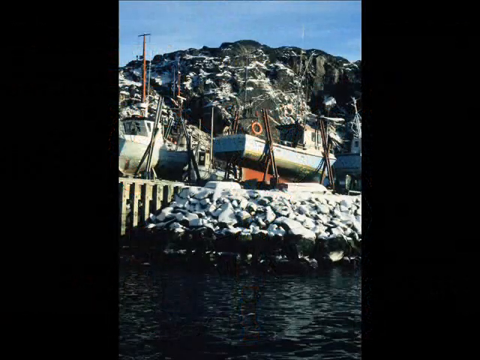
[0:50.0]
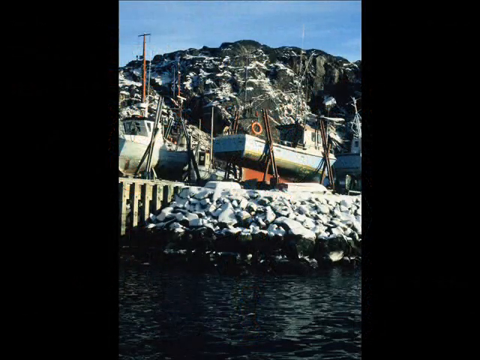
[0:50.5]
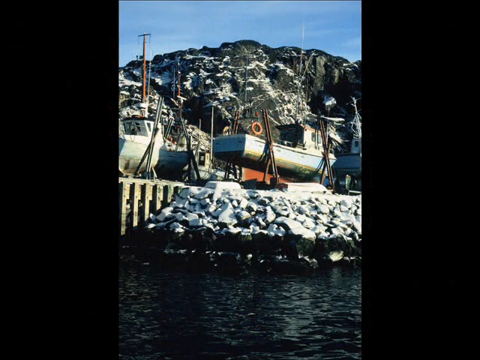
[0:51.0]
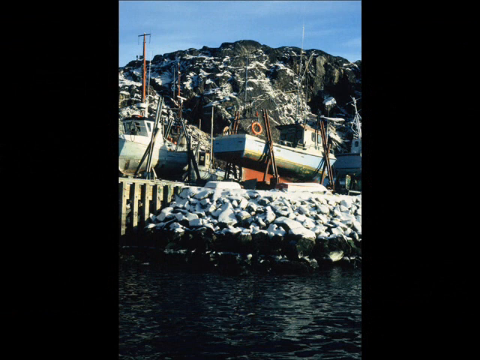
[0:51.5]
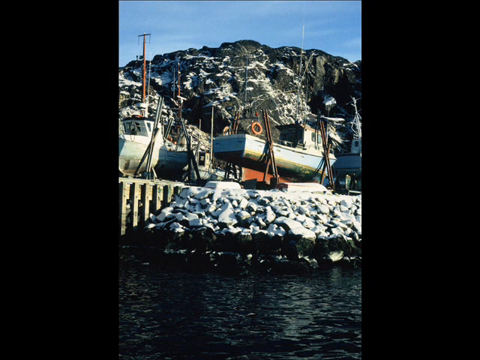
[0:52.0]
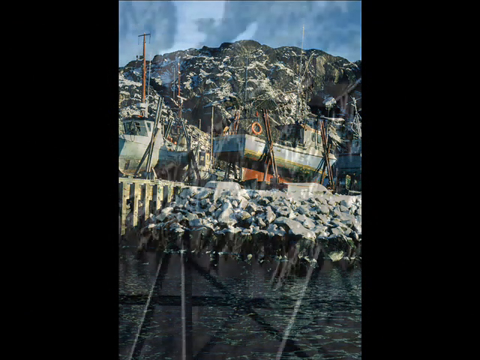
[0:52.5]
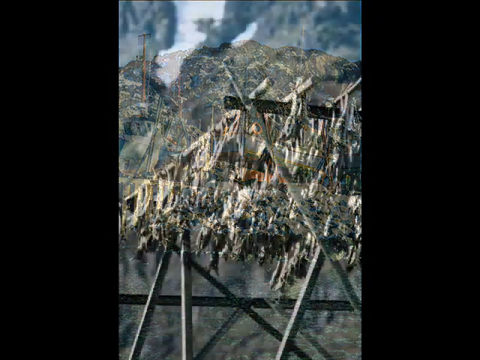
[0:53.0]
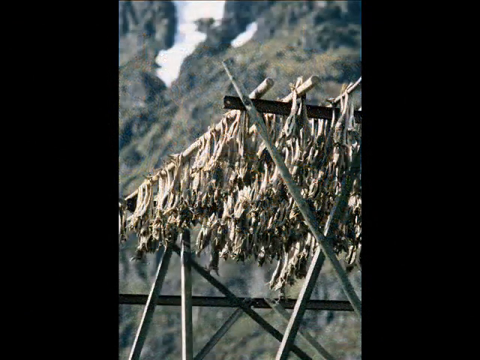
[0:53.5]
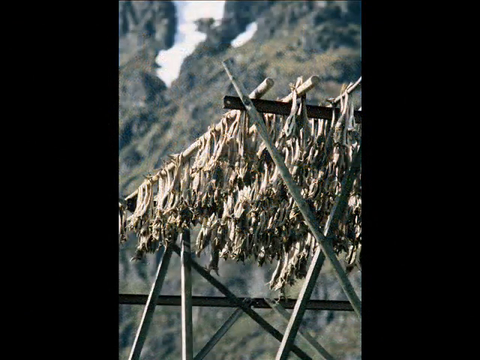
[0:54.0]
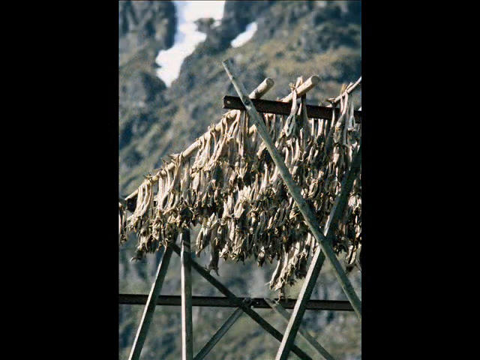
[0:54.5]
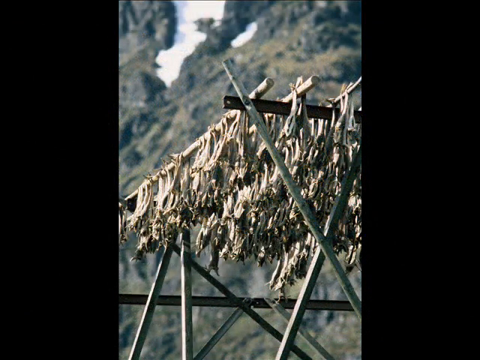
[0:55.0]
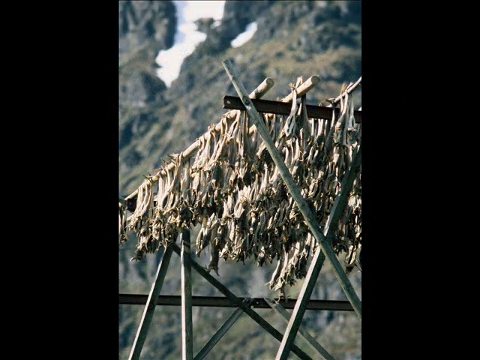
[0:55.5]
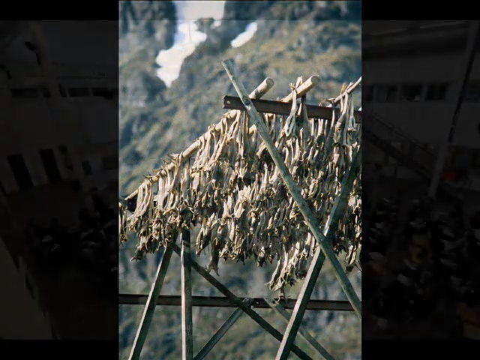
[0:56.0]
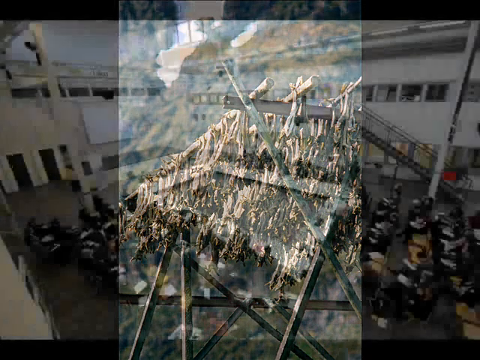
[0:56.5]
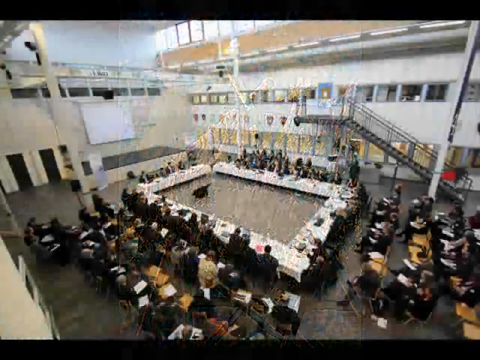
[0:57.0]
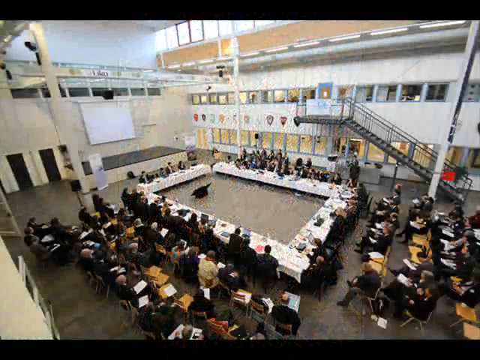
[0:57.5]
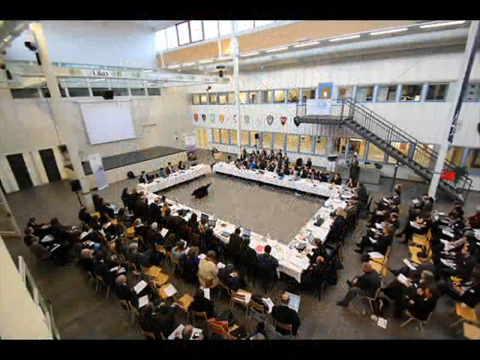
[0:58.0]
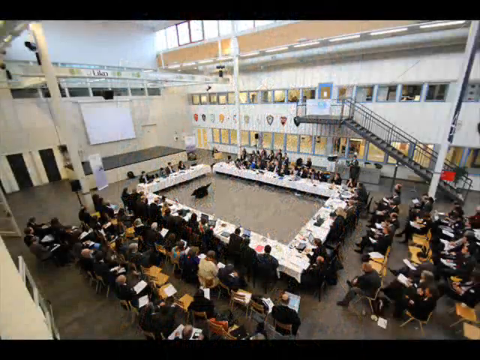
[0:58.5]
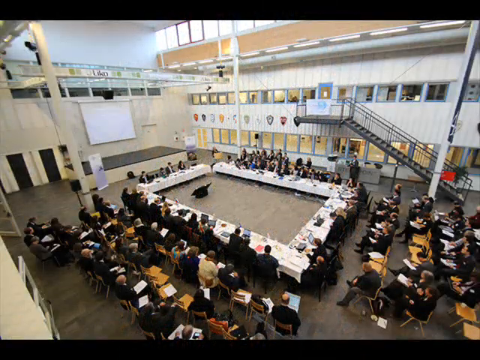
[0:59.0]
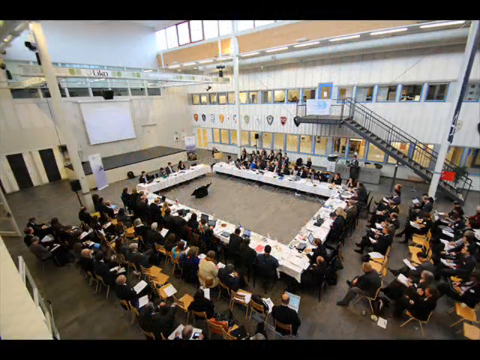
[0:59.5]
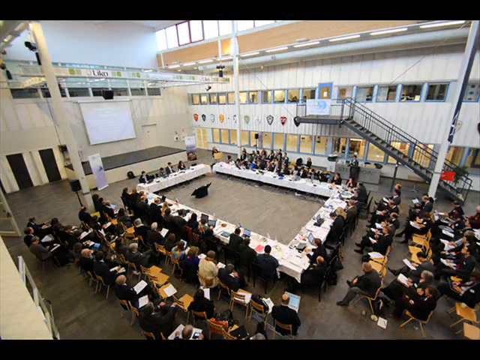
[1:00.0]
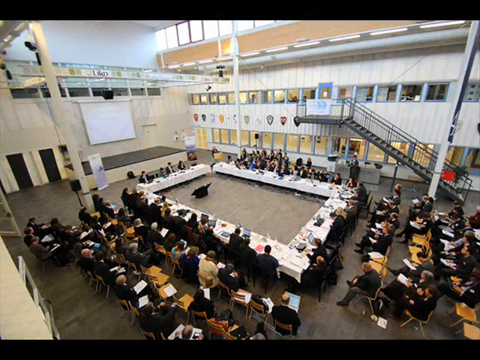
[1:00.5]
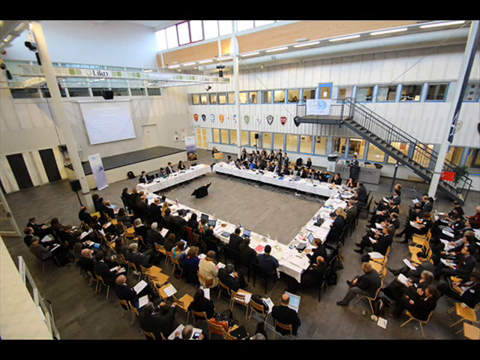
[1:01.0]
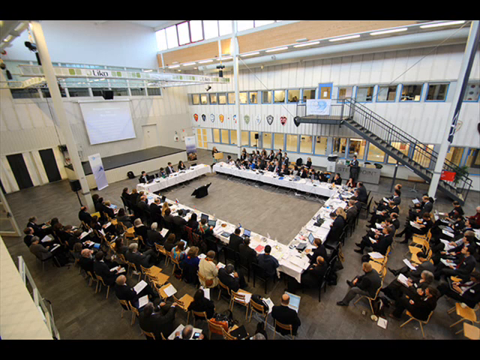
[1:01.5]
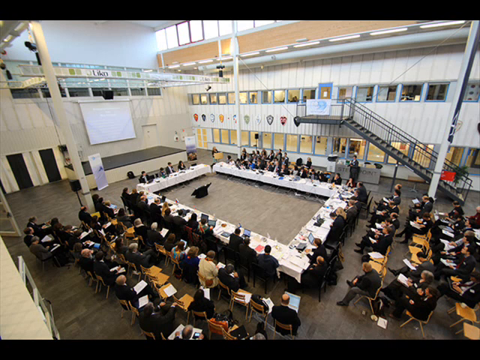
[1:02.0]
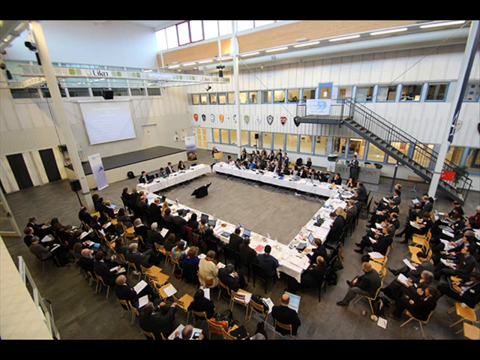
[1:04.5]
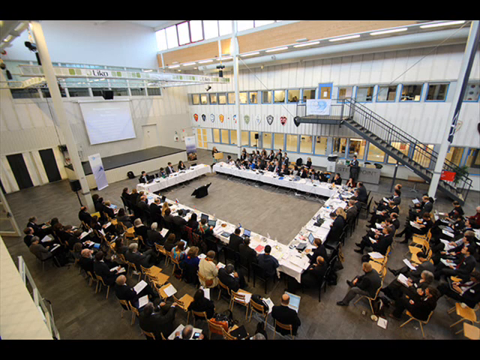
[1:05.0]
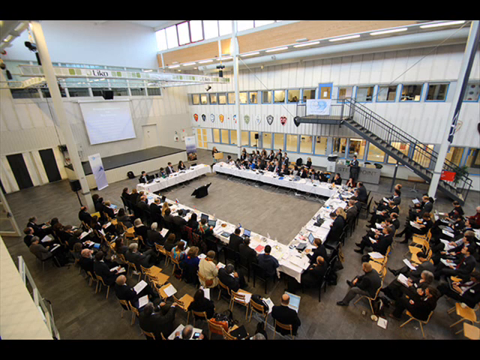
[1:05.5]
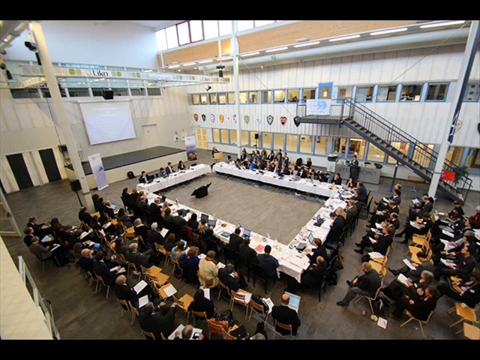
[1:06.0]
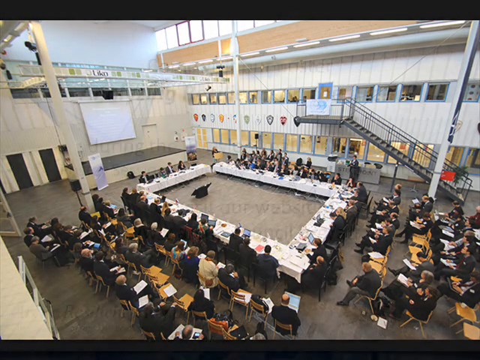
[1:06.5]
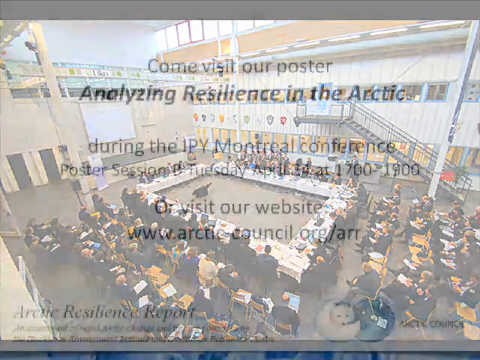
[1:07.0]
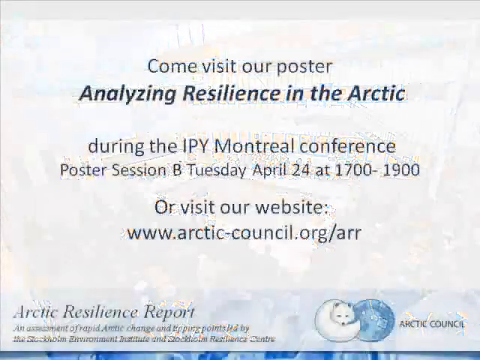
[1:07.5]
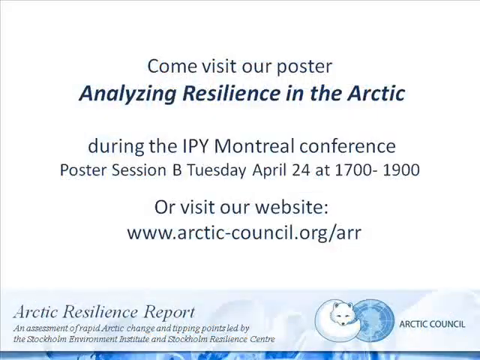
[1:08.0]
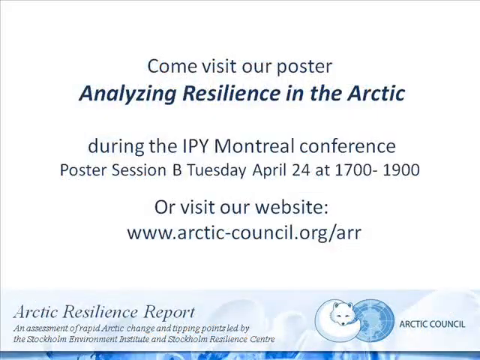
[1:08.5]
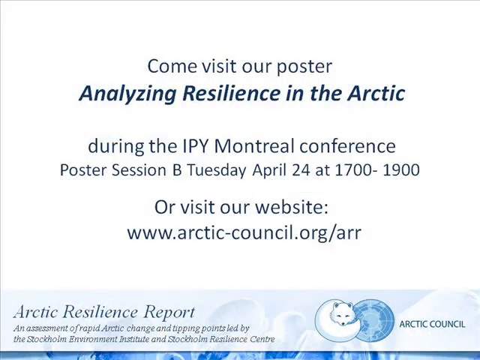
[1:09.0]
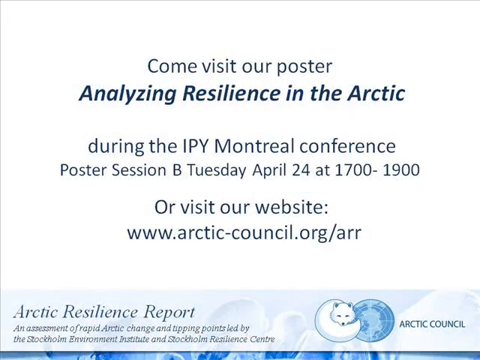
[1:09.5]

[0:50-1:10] Small boats appear to be docked on a shoreline in daytime, with rocks and water in the foreground and a mountain behind. Next, some kind of food hangs out to dry on a cross-shaped wooden frame with lots of wooden bars across it, the dried food dangling from it in the sun. A following image shows a large white room with white tables in a square, rectangular layout, people seated around them and two to three more rows of people seated behind, holding what look like notepads. A slide then reads "come visit our poster analyzing resilience in the Arctic during the IPY Montreal conference," giving a poster session on April 24 at 1300 to 1900 and the website www.arcticcastle.org, with a footer at the bottom reading "Arctic Resilience Report."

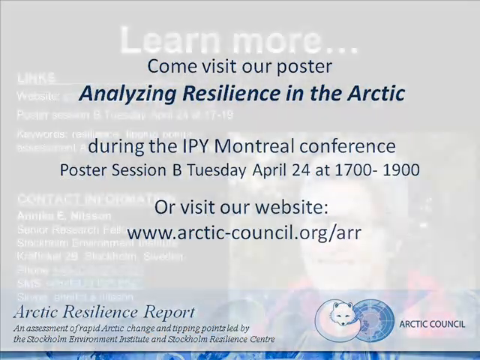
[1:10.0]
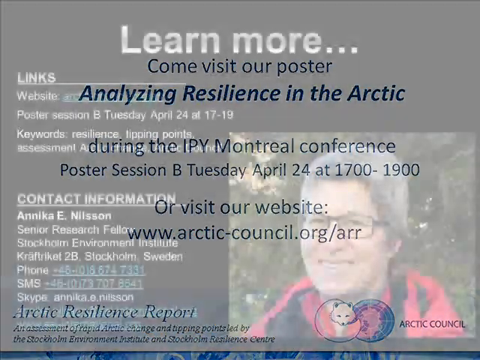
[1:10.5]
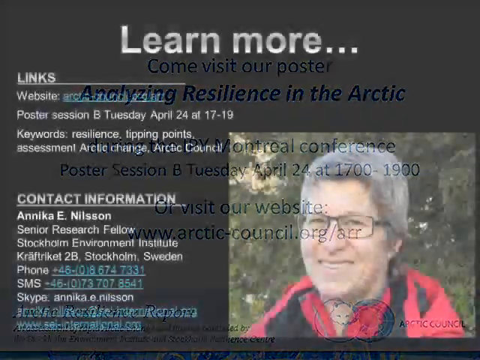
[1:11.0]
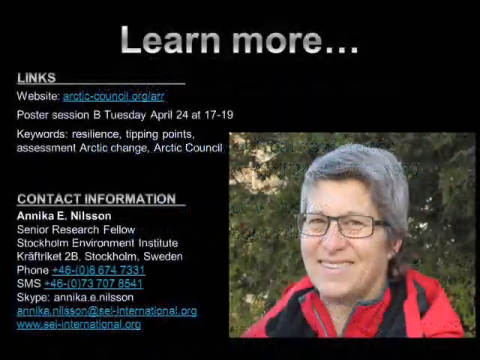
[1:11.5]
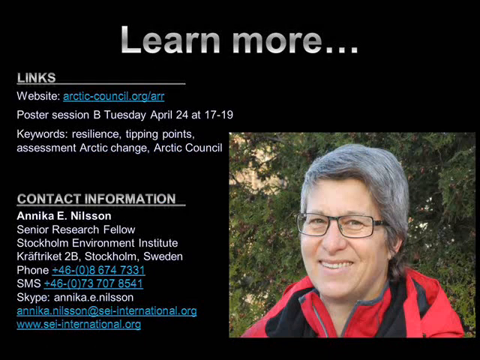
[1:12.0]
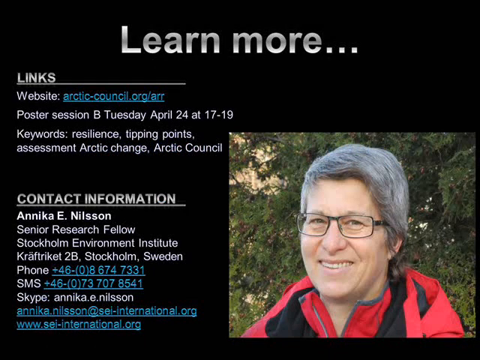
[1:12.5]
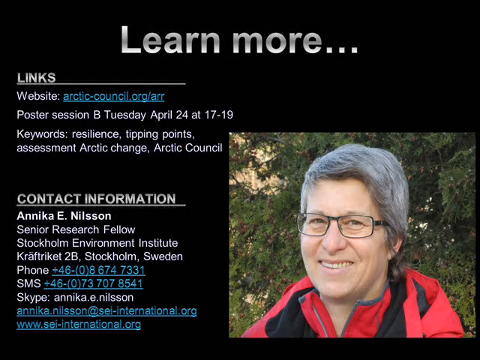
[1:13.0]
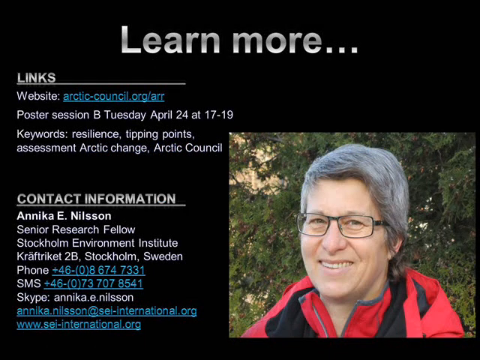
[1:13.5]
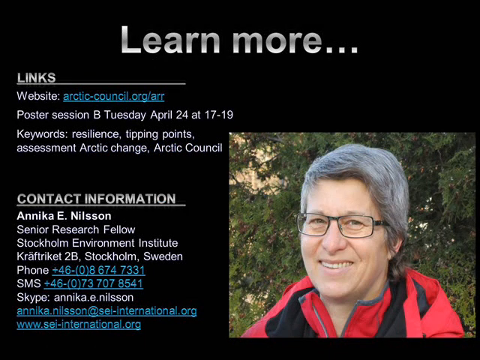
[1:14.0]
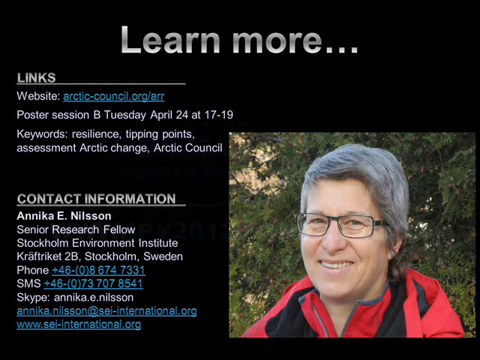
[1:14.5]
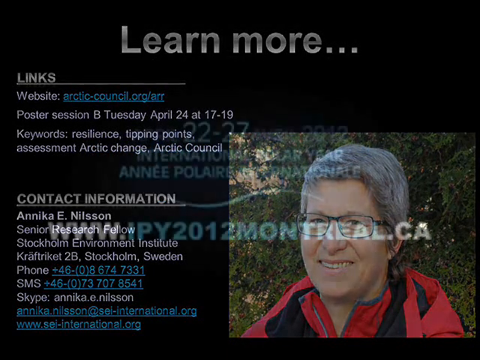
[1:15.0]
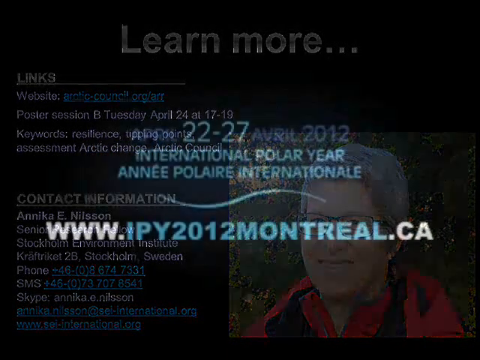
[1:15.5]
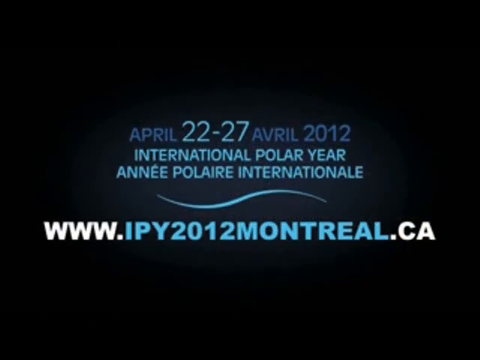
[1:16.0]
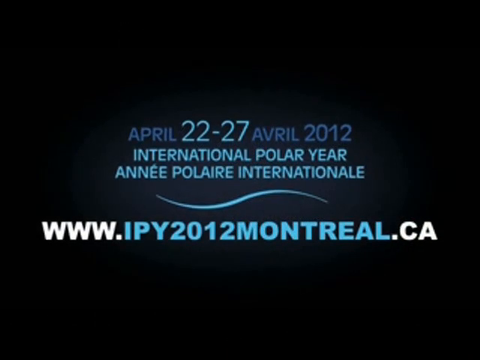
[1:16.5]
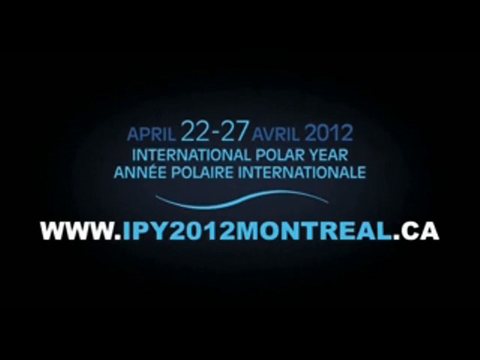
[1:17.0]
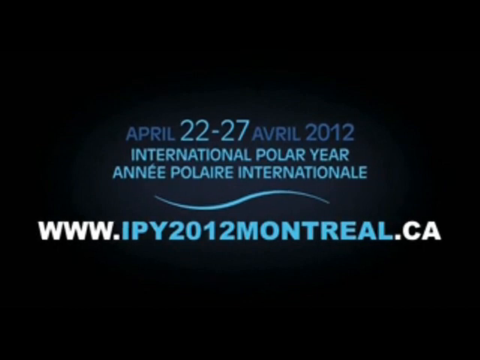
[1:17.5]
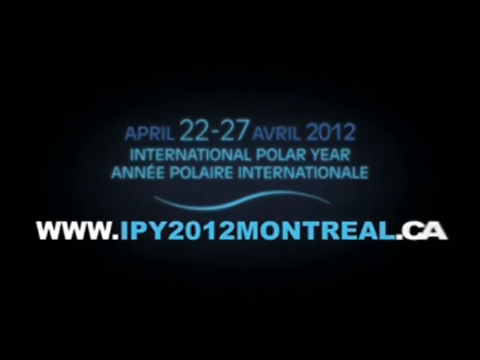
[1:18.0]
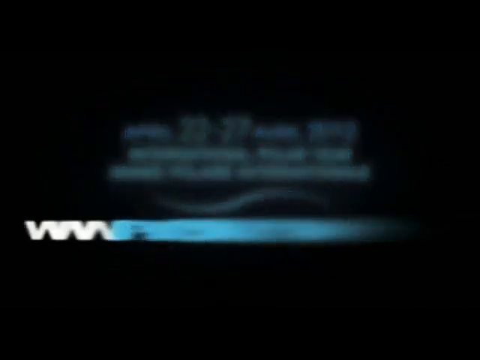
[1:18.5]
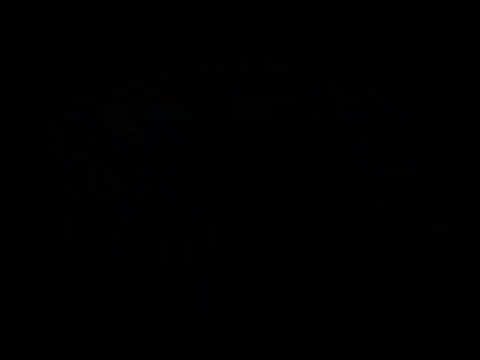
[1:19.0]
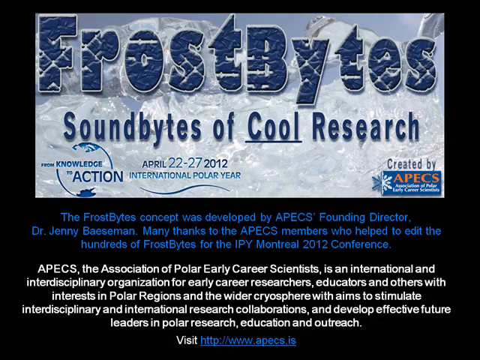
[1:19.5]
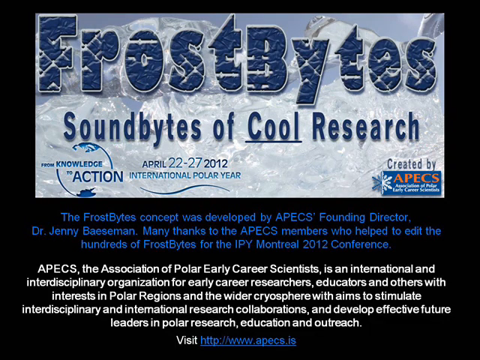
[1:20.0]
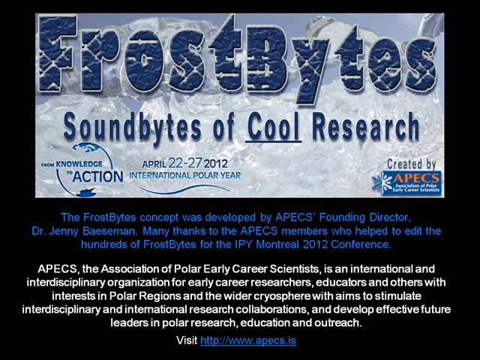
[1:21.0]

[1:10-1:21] A slide reads "learn more" with links, including the website arcticcouncil.org, and a poster session on Tuesday, April 24th, at 17 to 19. It lists keywords: "resilience, tipping points, assessment, Arctic change, Arctic Council." Underneath is contact information: "Anna Katie Nilsson, Senior Research Fellow, Stockholm Environment Institute, Kafka 2B, Stockholm, Sweden," followed by a phone number, SMS, Skype and email. On the right-hand side is a portrait of this woman, who has grey hair and wears a red coat. Finally, blue text reads "April 22nd to 27th, April 2012, International Polar Year," with a blue wavy line and the URL www.ipy2012montreal.ca.